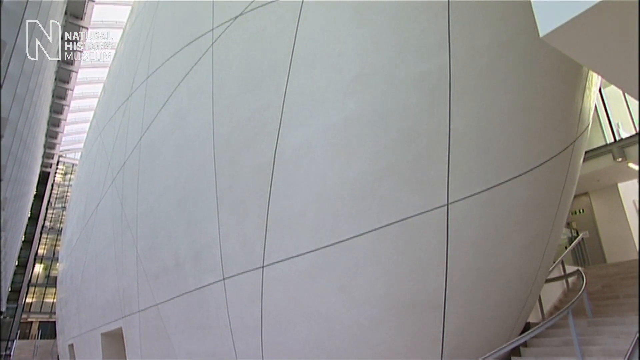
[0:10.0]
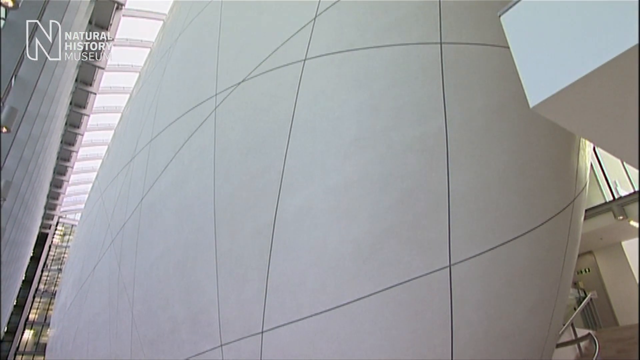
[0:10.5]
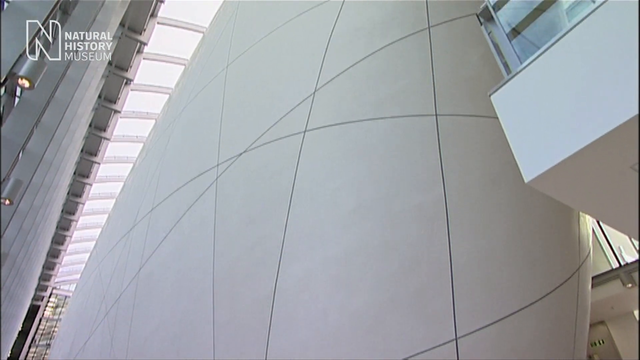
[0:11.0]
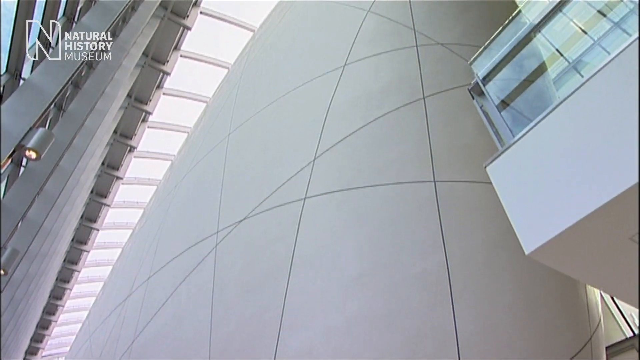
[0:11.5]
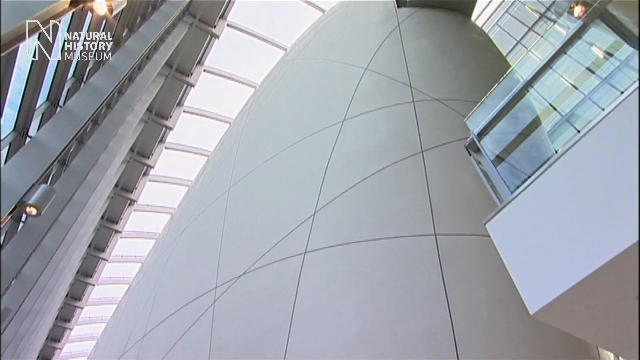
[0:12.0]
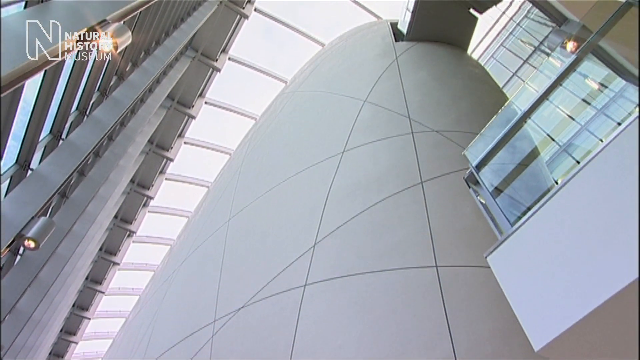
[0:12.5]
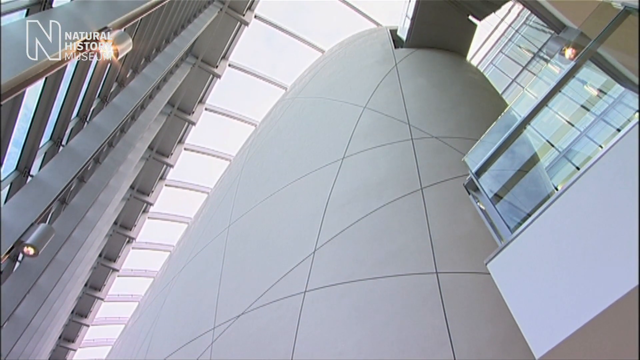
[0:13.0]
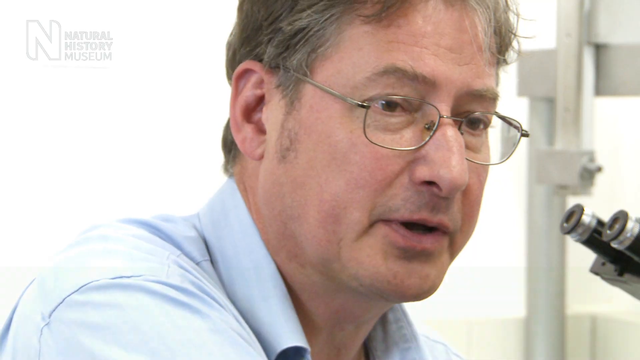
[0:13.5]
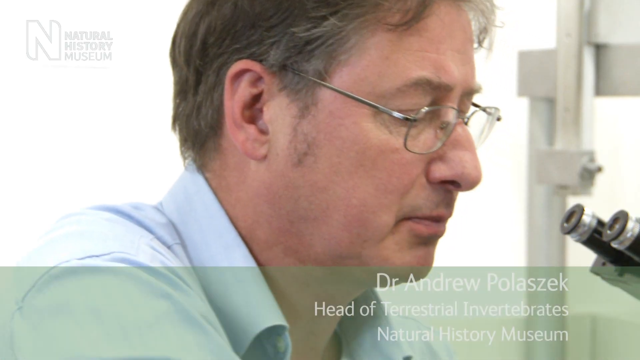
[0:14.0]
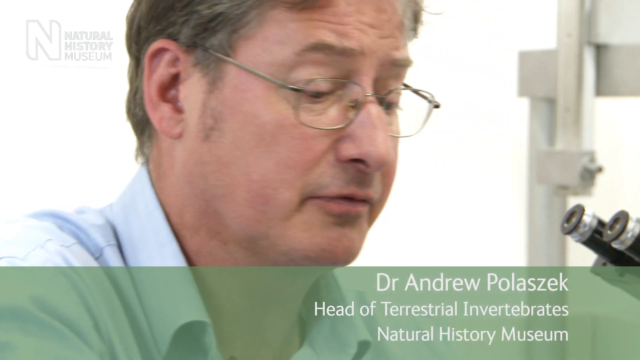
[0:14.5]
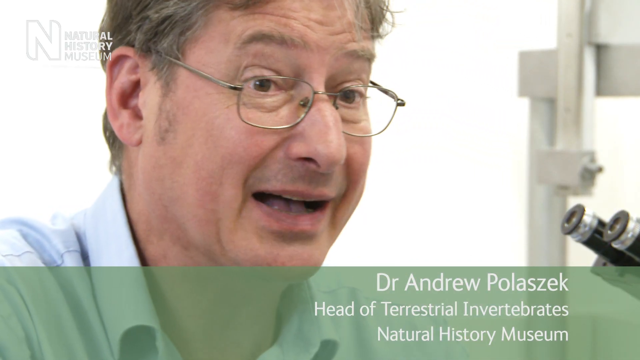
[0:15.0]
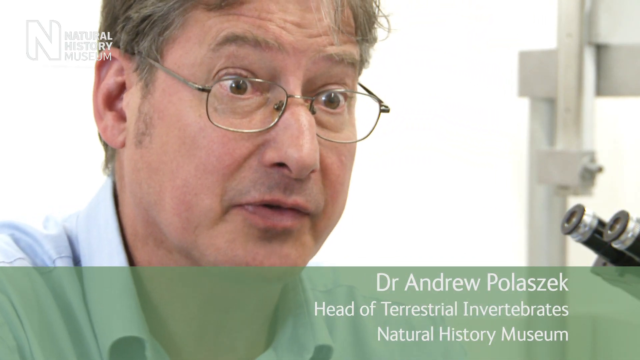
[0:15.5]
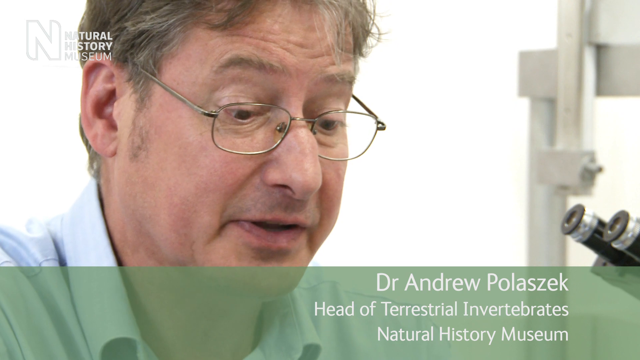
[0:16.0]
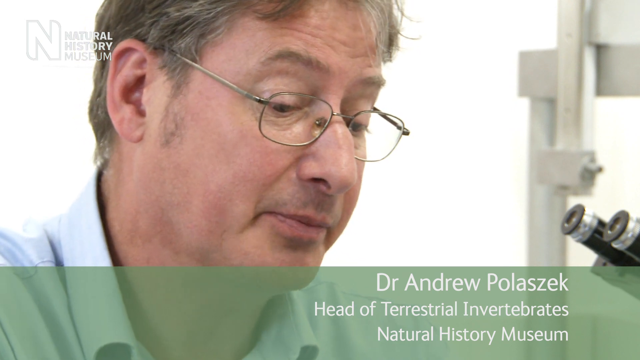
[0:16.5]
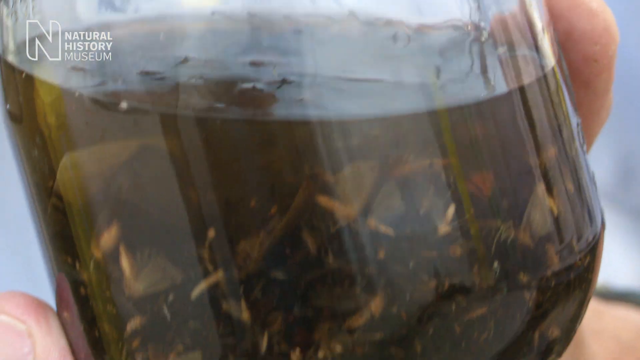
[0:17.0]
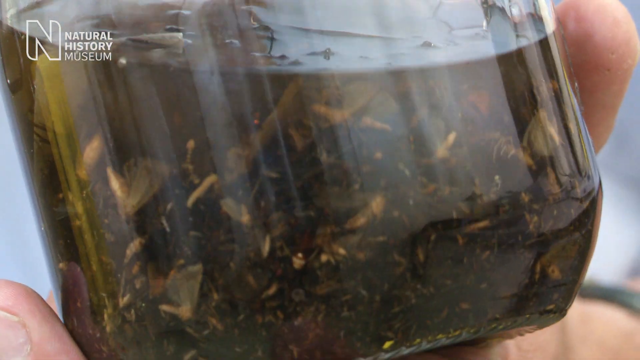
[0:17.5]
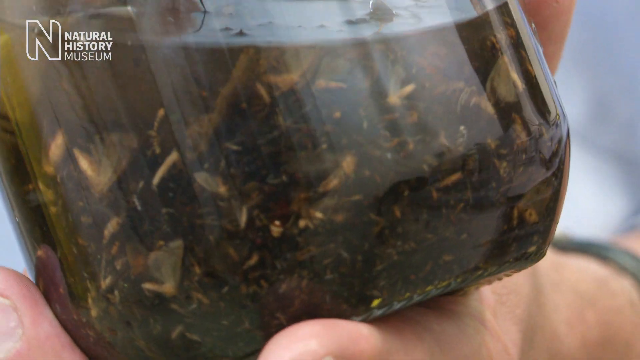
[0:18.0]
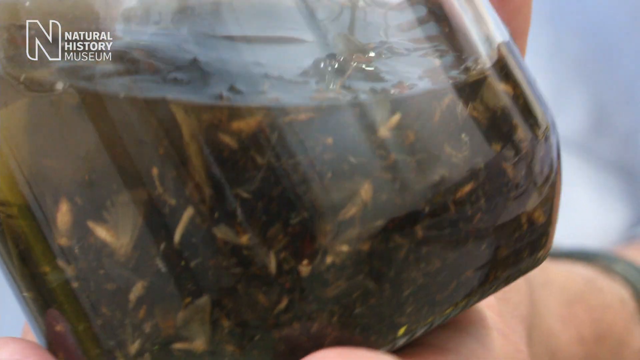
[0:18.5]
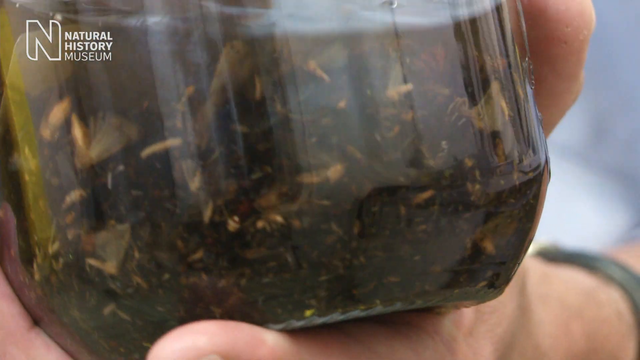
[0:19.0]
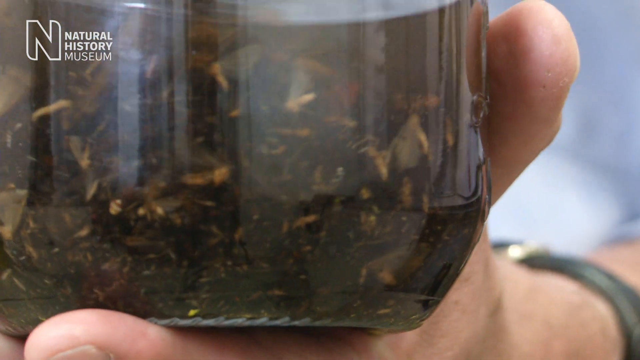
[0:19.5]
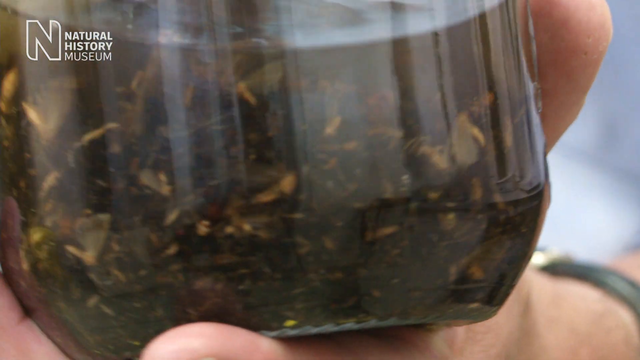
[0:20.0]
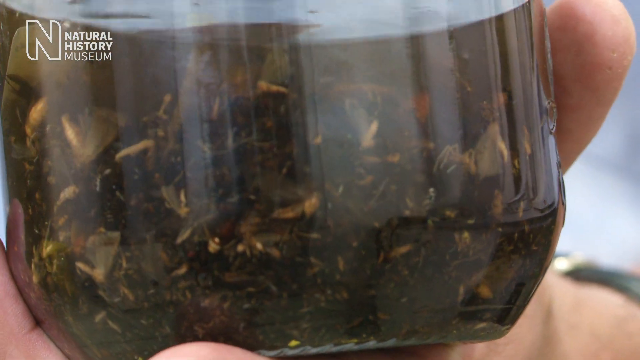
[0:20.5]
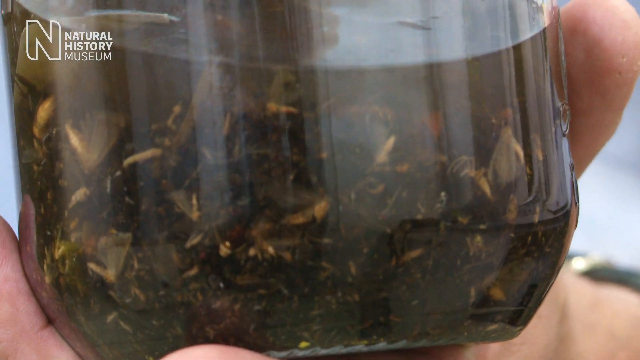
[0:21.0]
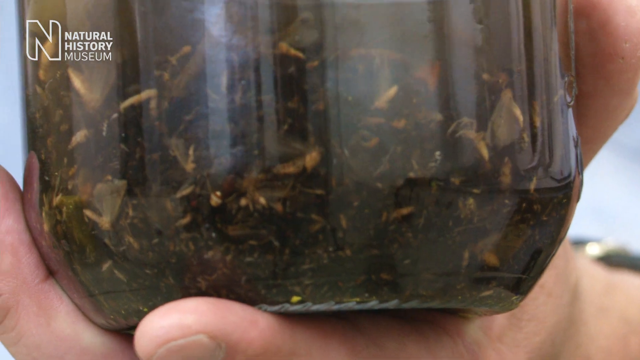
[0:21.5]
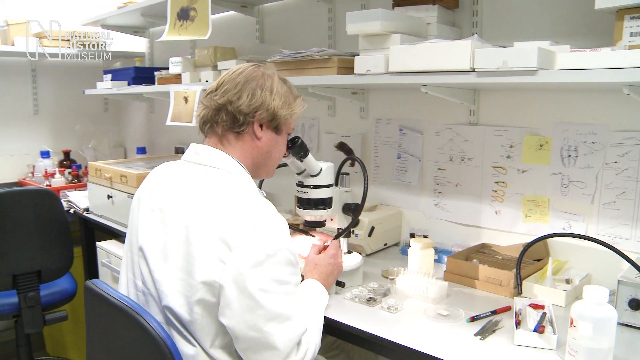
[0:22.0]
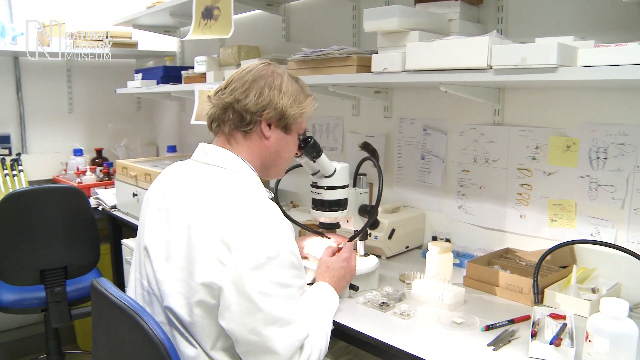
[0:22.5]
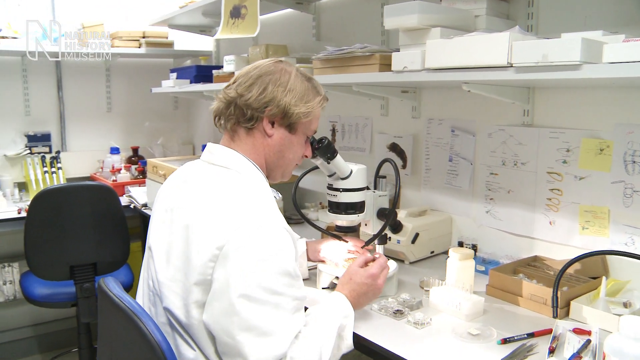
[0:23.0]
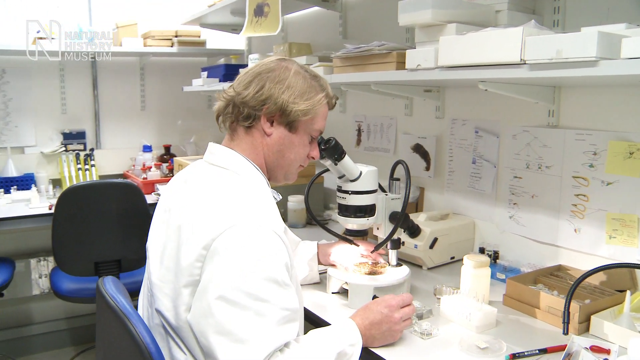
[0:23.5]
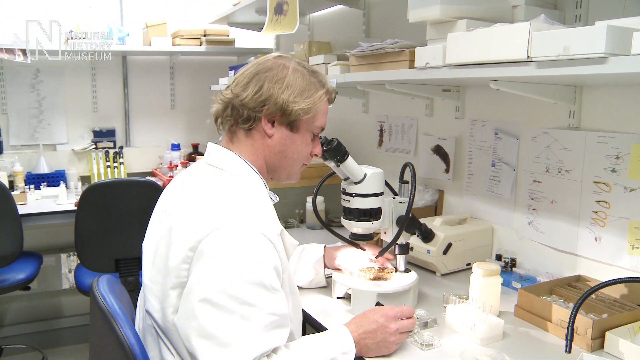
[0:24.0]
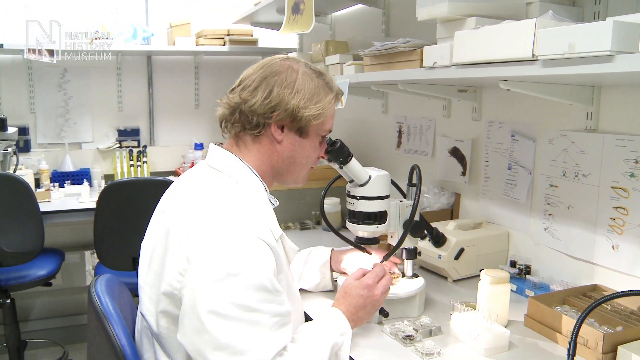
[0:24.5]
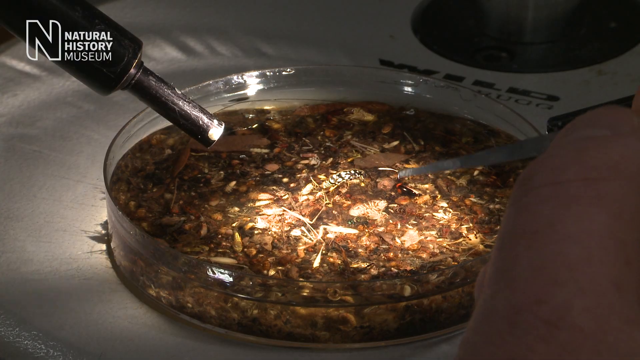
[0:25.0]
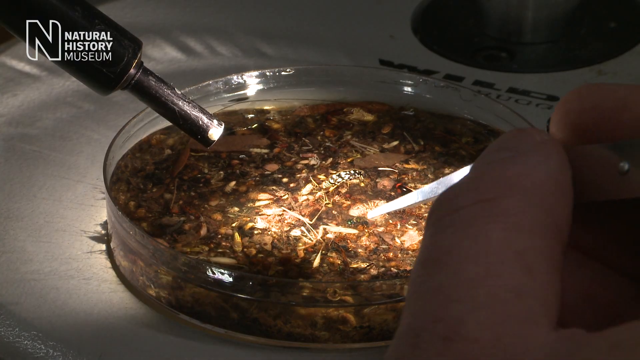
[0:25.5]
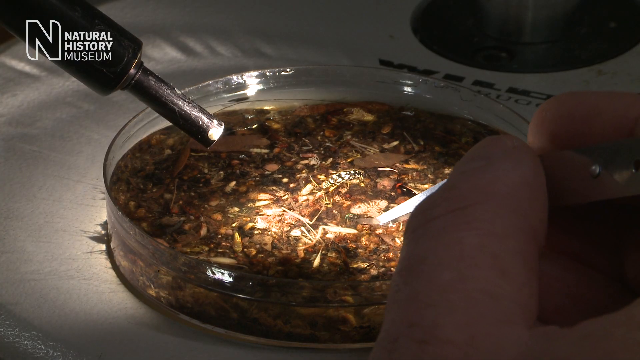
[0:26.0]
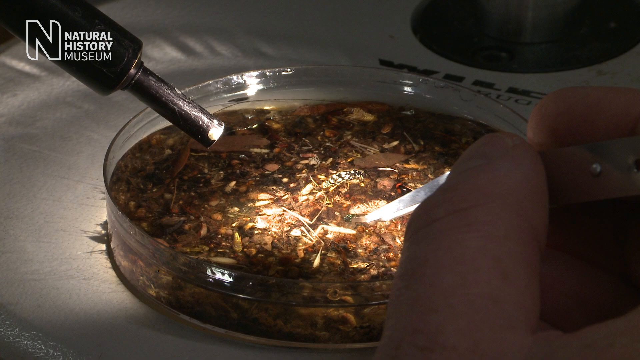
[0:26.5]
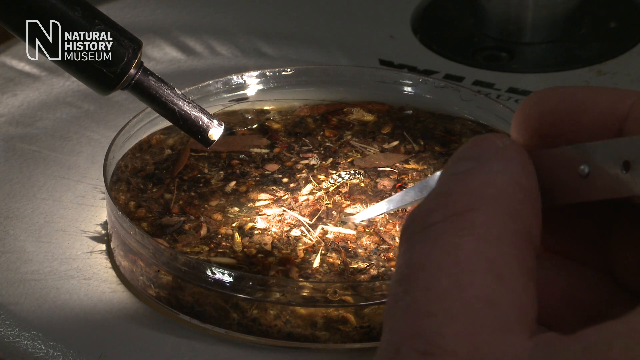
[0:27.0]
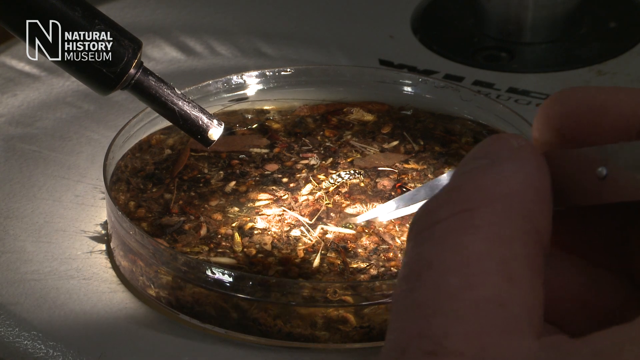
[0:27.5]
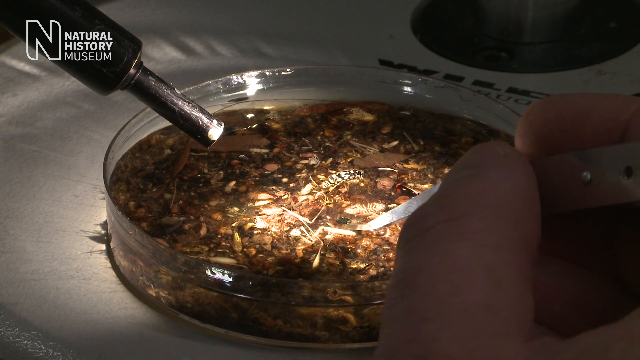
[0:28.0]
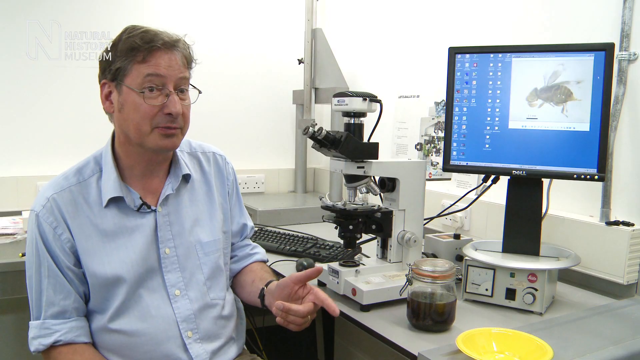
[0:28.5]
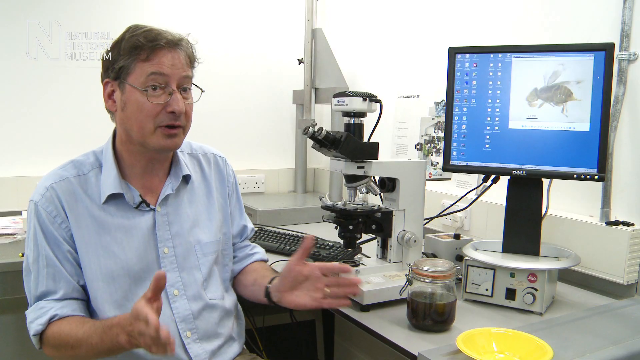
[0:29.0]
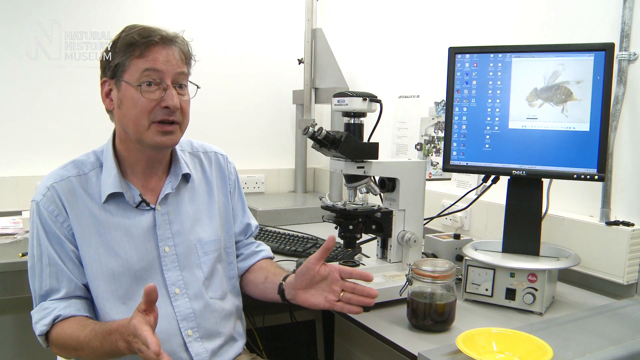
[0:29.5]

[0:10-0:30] In the more modern building, the camera gradually pans from the bottom of a stairwell with a white outside, which the stairs might go around, up to the ceiling of the stairwell. On the right-hand side there is a mezzanine level with a glass roof over it all and glass across the mezzanine. The video then cuts to Dr. Andrew Polisek, apparently the head of terrestrial investigations, who initially looks at the camera for a moment and then looks across into the microscope. He is very serious, moves slightly away from the microscope and apparently begins to talk, still looking down away from the camera. He looks quite surprised. He wears glasses and a blue shirt and has greyish-brown hair, and he nods slightly to the left and then the right. The camera then shows a glass vessel containing brown liquid with what looks like sediment holding lots of quite large artefacts; above the artefacts is clear brown water or blurry green water. His hands tip the vessel to the left-hand side and swirl it around a bit. The next shot shows a gentleman with blonde hair and a white coat looking through a microscope. The camera moves in towards him as he lifts his eyes from the microscope and lifts his hand, and then goes into what he is looking at: sludge within a Petri dish. His hand, with perhaps tweezers or some sort of pointer, moves into the water from the right-hand side. Light from a light source points directly into a portion of the Petri dish, shining on the brown water with some white areas, as the tweezer-type object pokes from the right. The video then returns to Dr. Polisek talking towards the right-hand side of the camera, as if speaking to somebody, with a computer on the desk on the right-hand side next to him showing a picture of a white wasp-like creature on a blue screen.